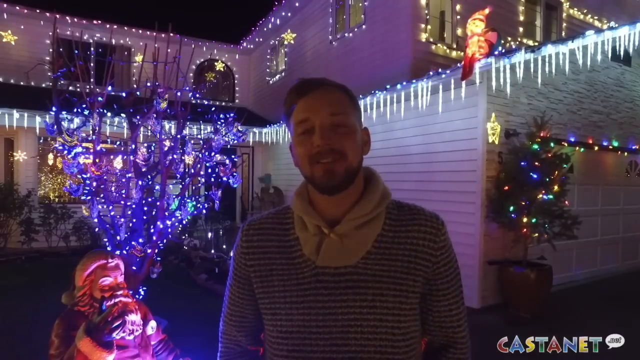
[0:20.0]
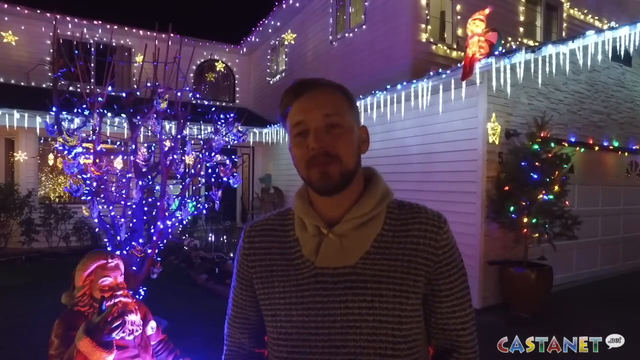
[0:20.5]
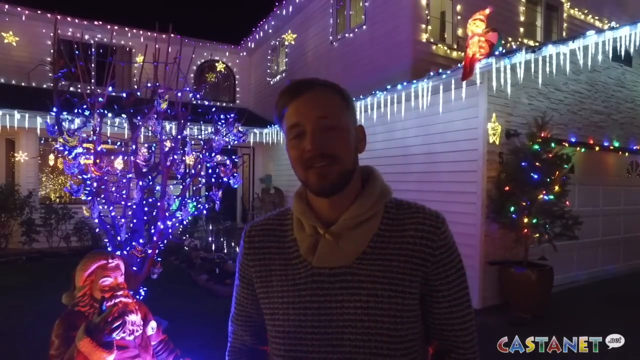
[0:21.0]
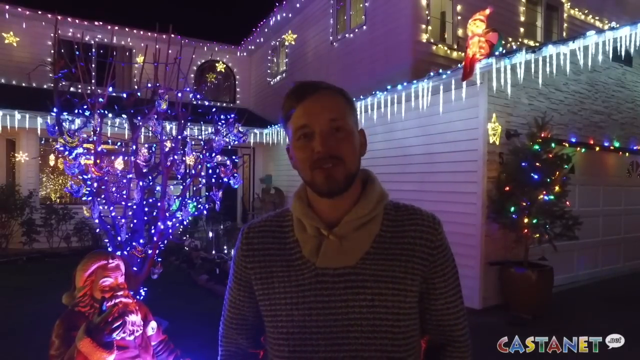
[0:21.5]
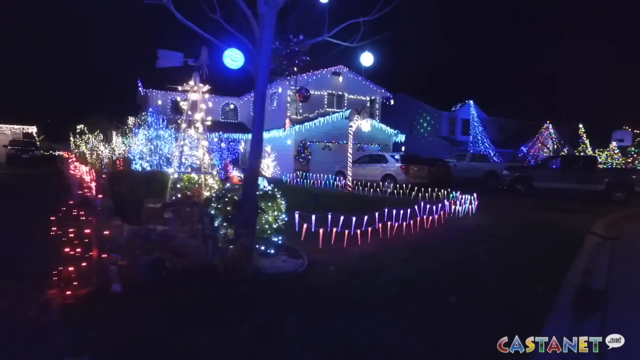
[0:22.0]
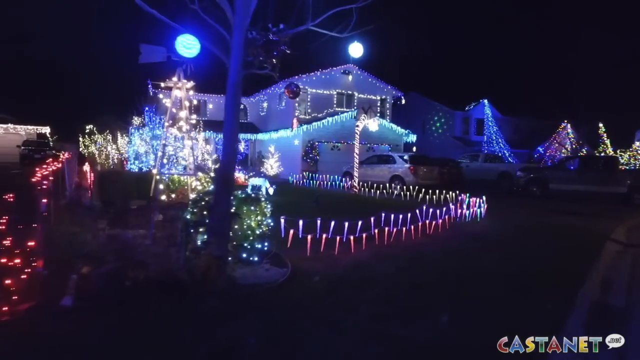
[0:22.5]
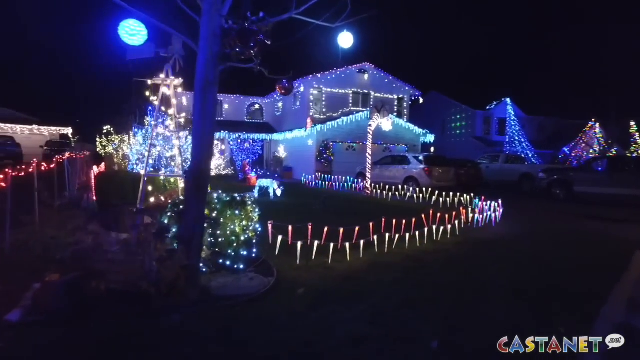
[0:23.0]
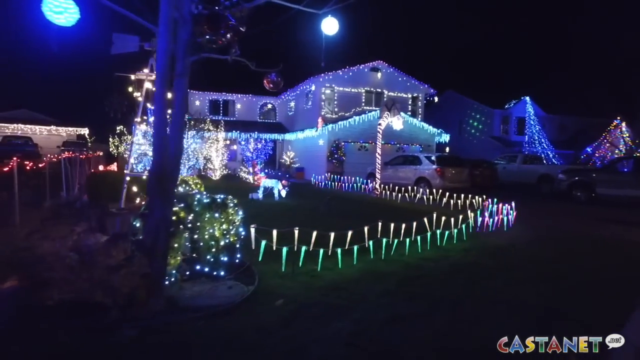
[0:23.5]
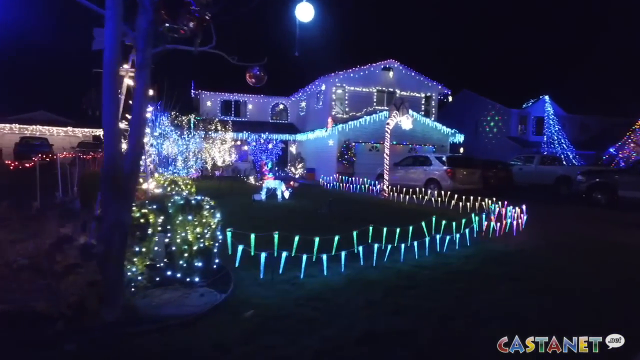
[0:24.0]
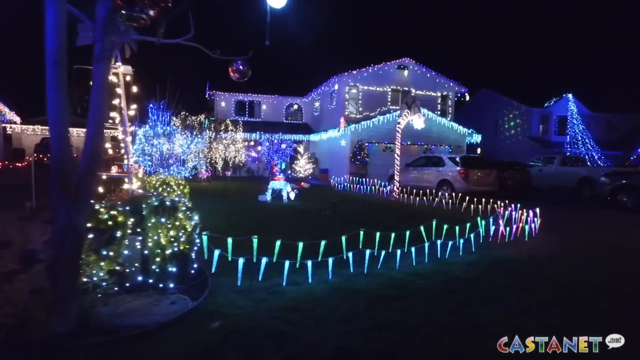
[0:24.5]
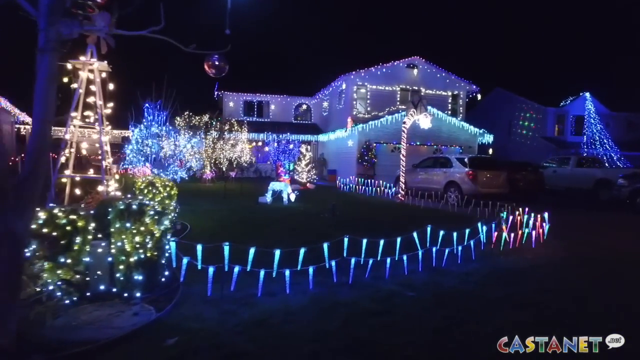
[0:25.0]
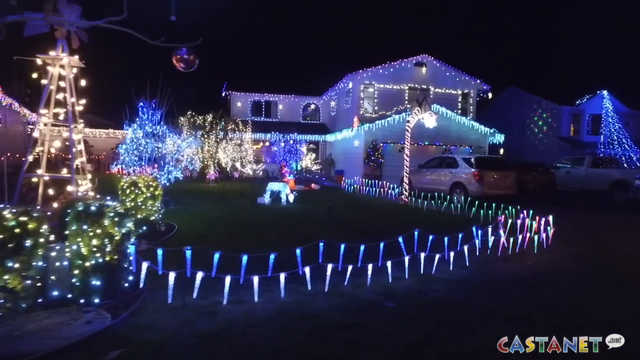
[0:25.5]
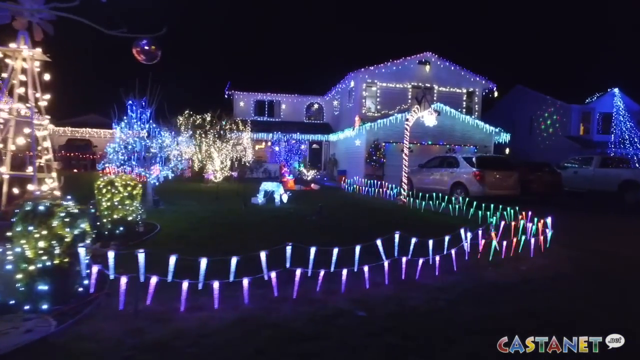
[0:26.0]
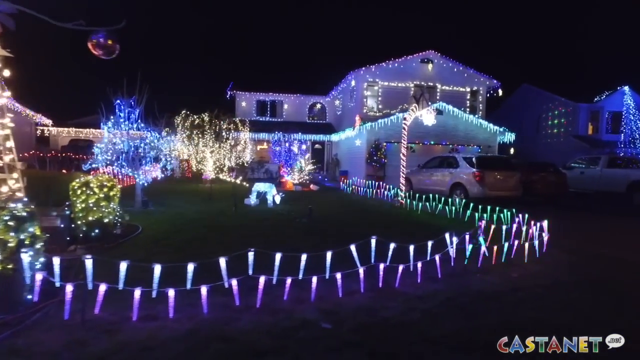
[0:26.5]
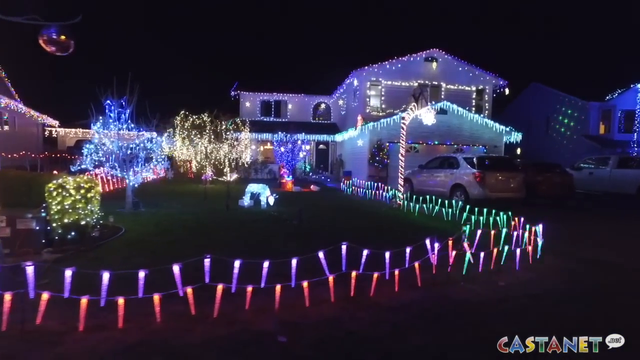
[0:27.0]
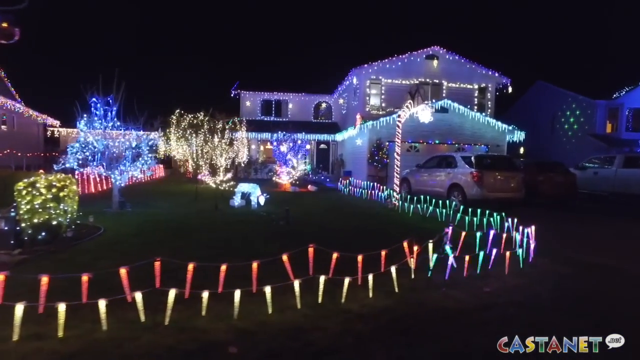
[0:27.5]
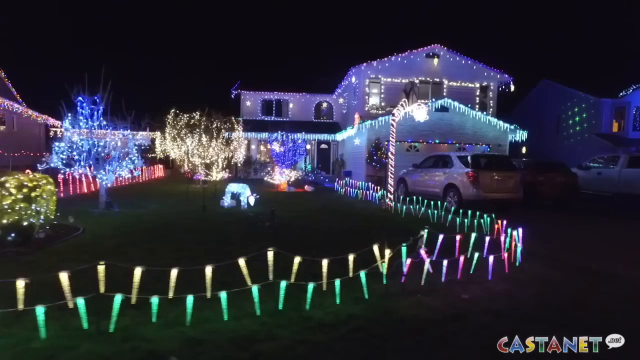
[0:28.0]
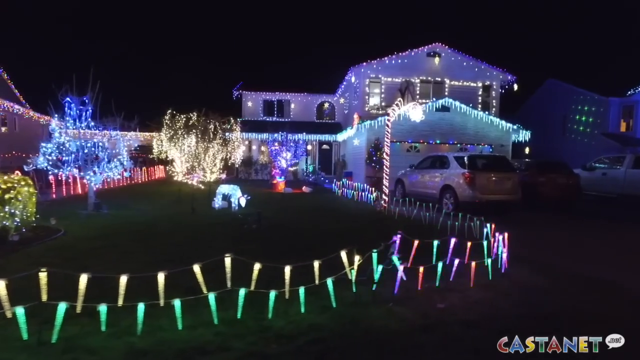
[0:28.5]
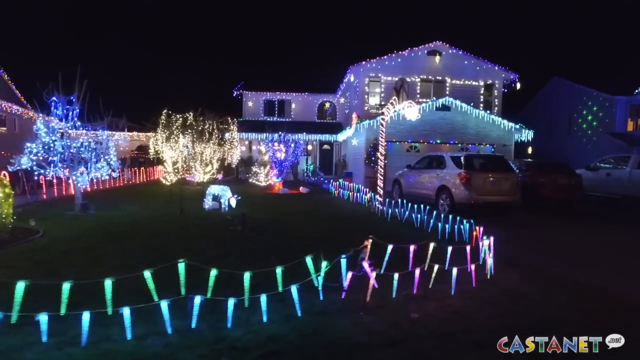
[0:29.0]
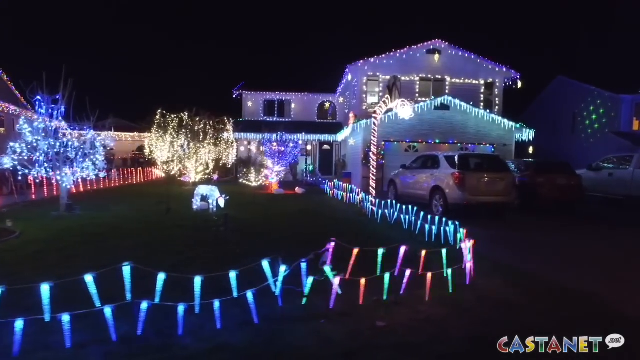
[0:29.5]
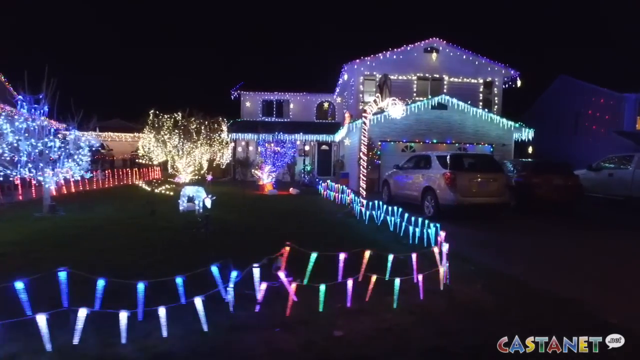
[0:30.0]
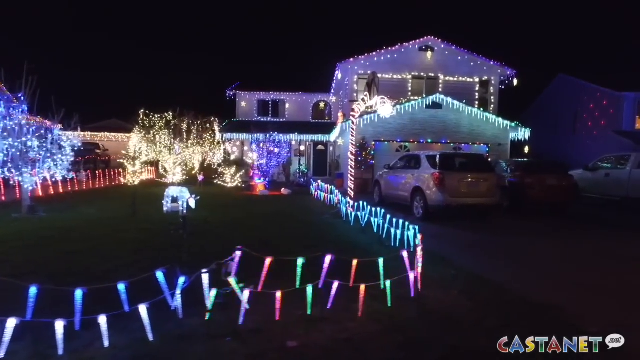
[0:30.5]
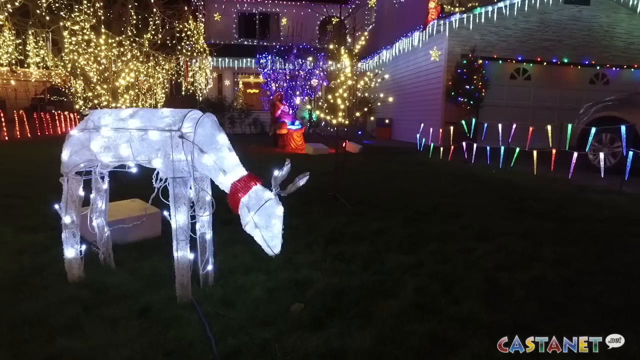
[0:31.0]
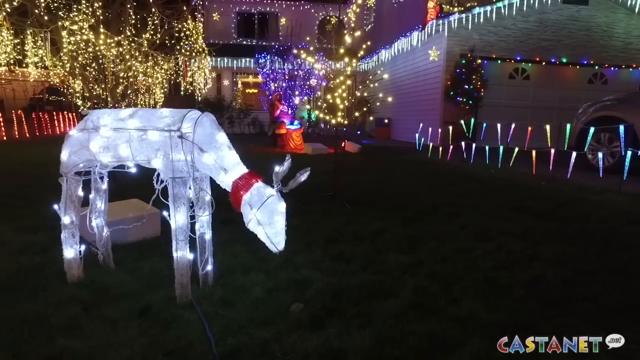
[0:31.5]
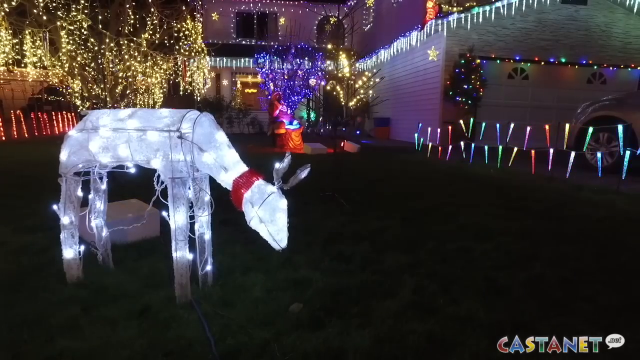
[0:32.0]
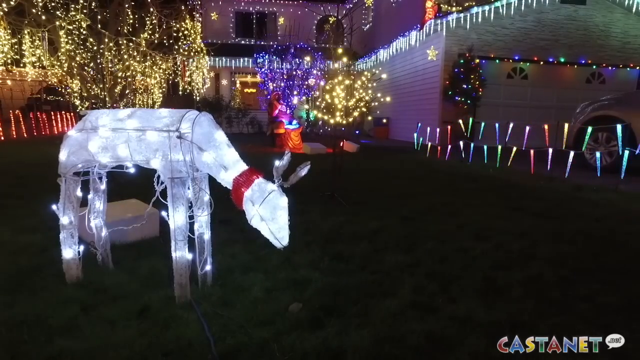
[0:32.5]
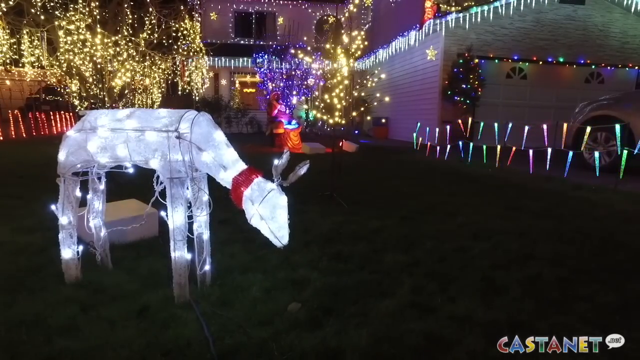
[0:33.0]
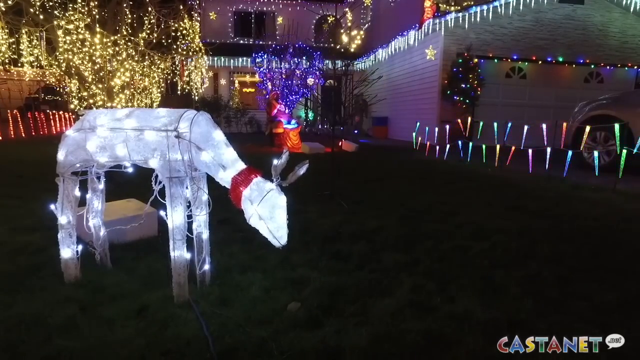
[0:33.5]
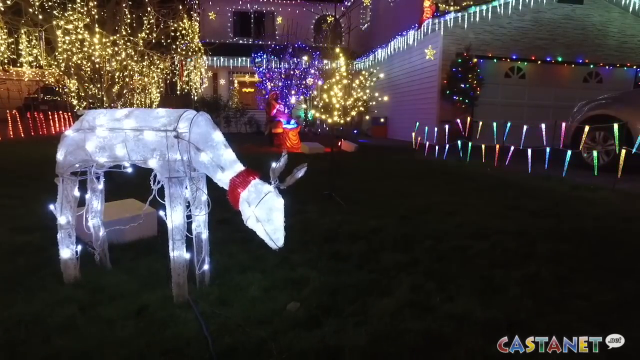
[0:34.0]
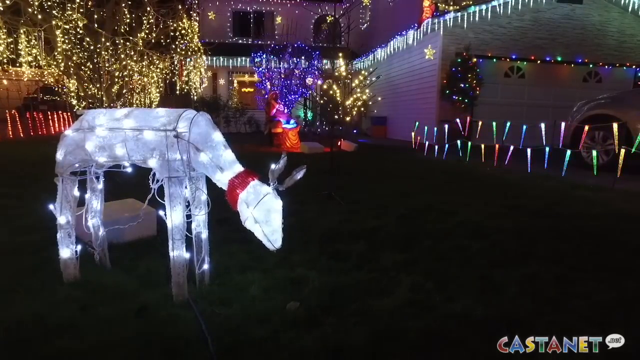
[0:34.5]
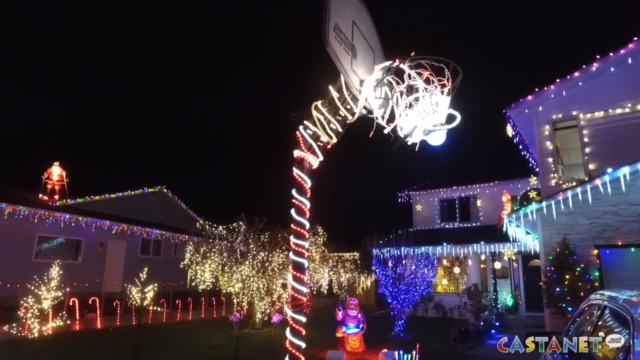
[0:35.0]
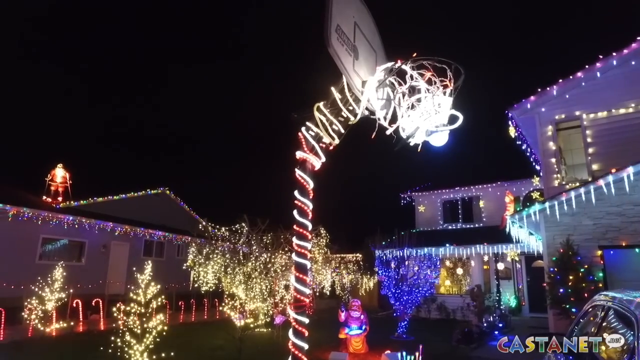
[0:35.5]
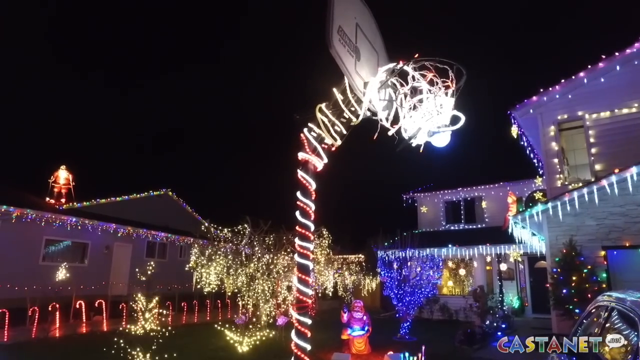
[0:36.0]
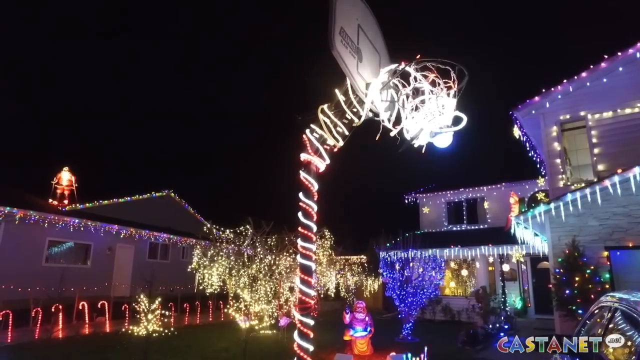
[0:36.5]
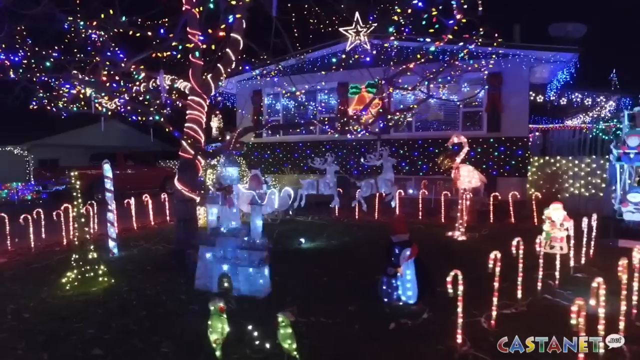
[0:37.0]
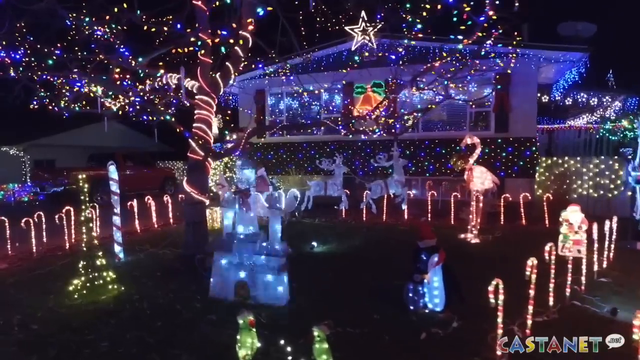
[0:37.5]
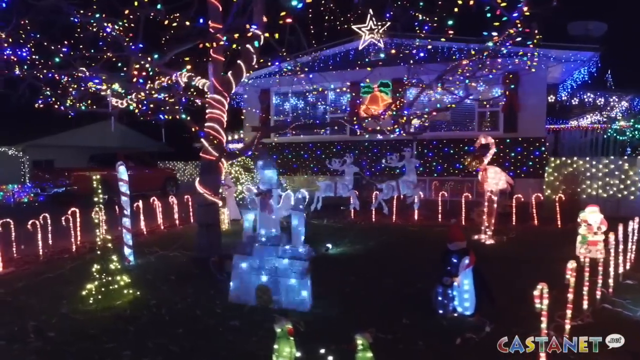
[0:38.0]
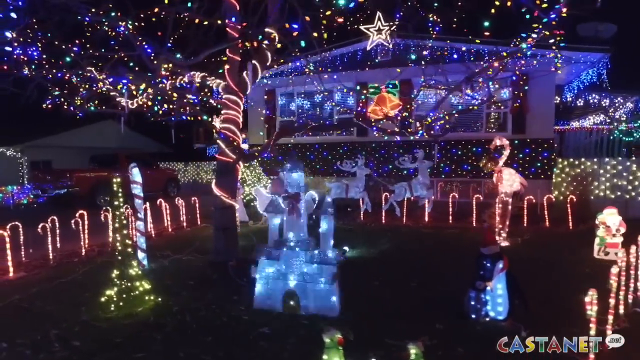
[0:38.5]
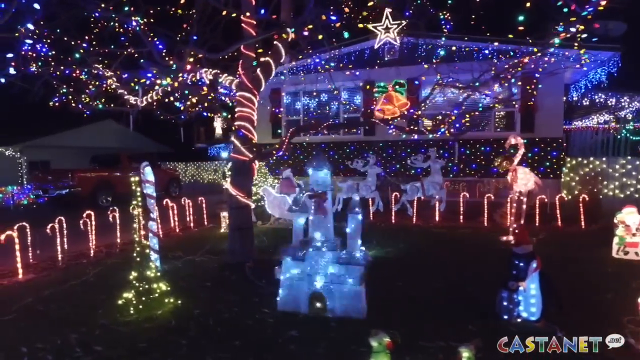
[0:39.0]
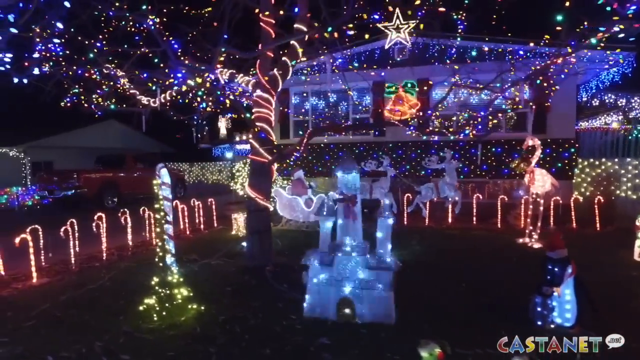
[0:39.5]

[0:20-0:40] One of the men seen earlier is standing in front of a house with a bunch of Christmas decorations. What look like icicle-type lights hang off the house. On the left side in the background there is a Christmas tree with lights on it that looks like a fake tree, a star hanging by it, and some lights that seem to be attached to the garage. On the right side there are blue lights on what looks like a tree or something, and a Santa Claus laying down. The man talks and moves his body back and forth a little. Then a person walks and looks at the decorated house. It has flashing lights on trees, a deer wearing a red collar that moves its head up and down, and some crystal-like lights that are kind of highlighting the driveway. A car is parked in the driveway, and a basketball hoop has lights all around it too.